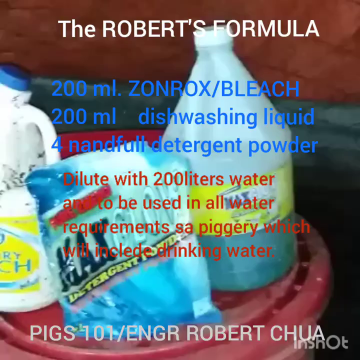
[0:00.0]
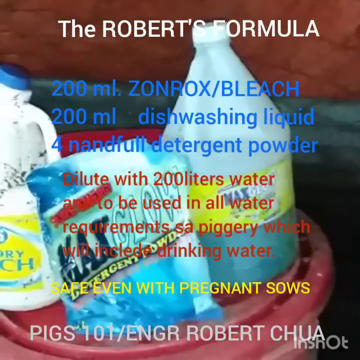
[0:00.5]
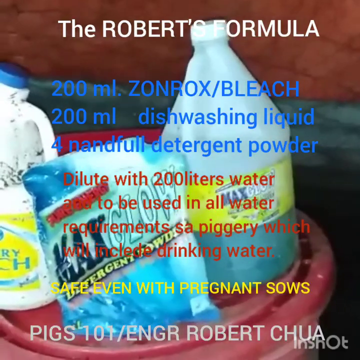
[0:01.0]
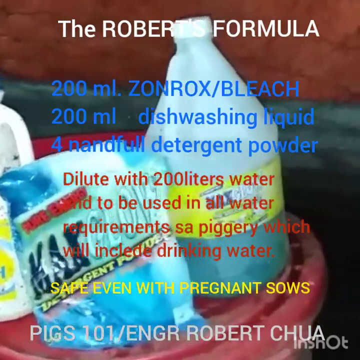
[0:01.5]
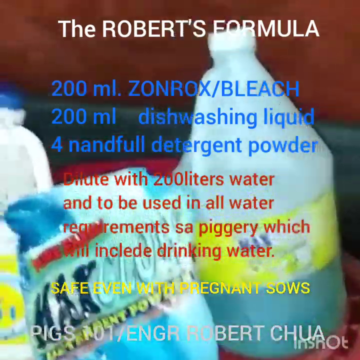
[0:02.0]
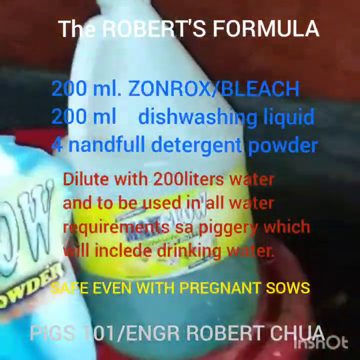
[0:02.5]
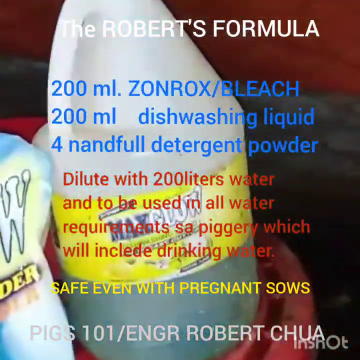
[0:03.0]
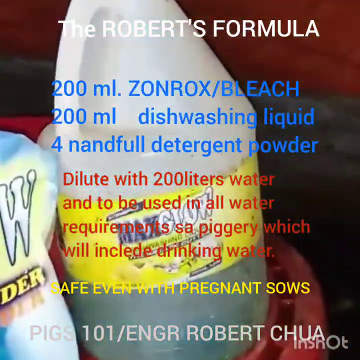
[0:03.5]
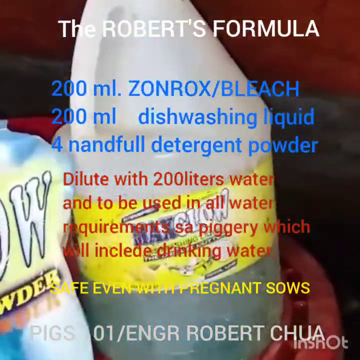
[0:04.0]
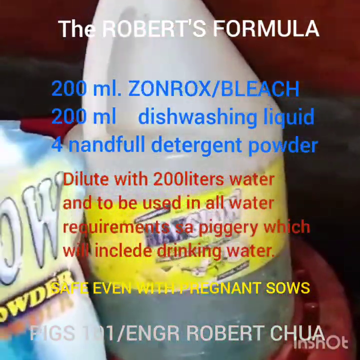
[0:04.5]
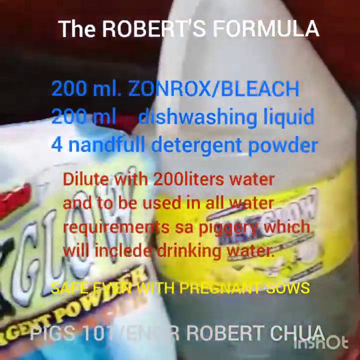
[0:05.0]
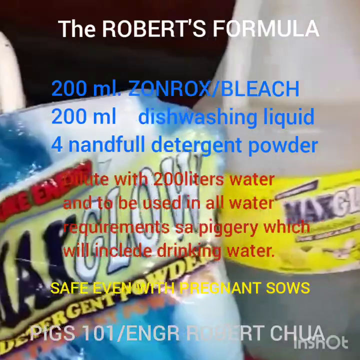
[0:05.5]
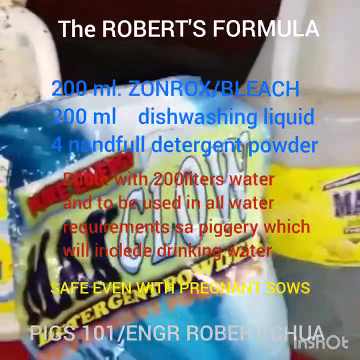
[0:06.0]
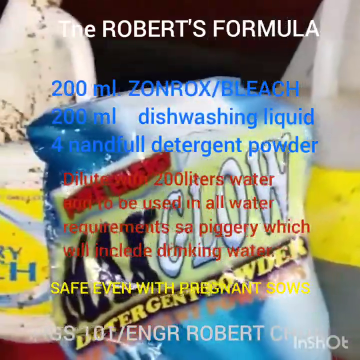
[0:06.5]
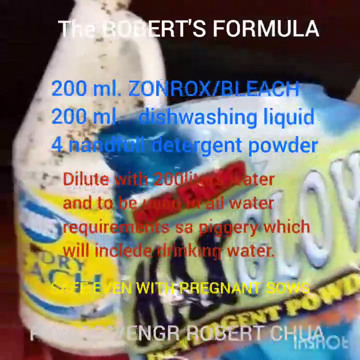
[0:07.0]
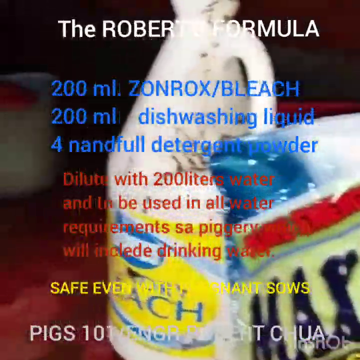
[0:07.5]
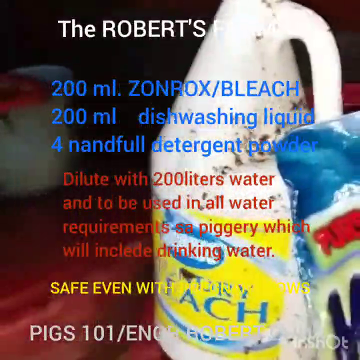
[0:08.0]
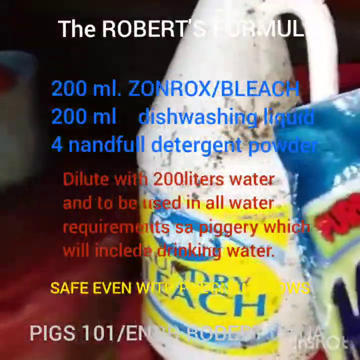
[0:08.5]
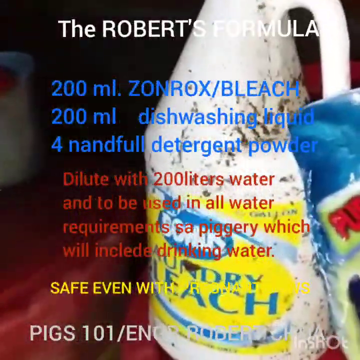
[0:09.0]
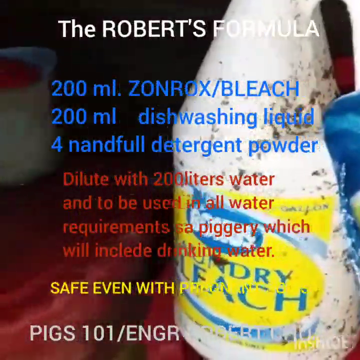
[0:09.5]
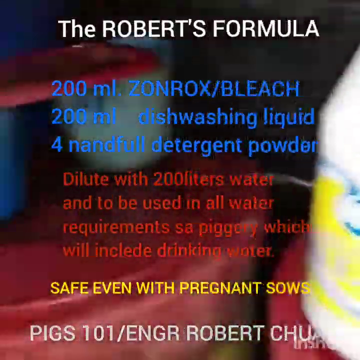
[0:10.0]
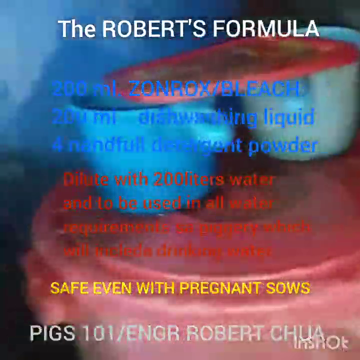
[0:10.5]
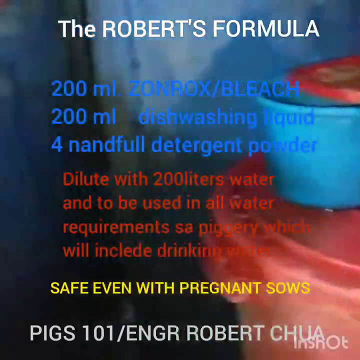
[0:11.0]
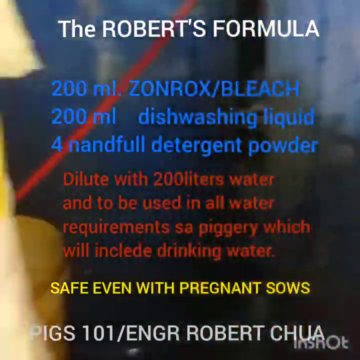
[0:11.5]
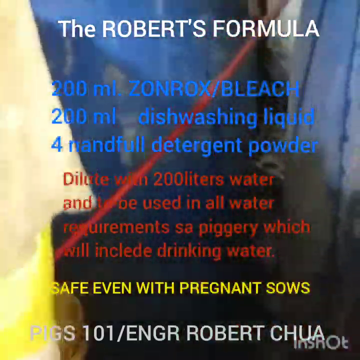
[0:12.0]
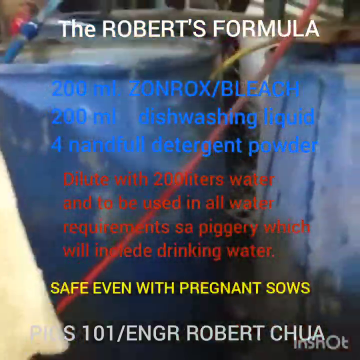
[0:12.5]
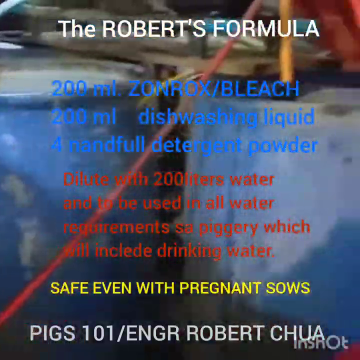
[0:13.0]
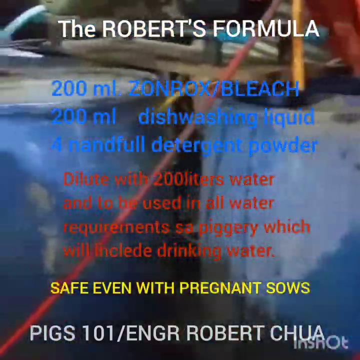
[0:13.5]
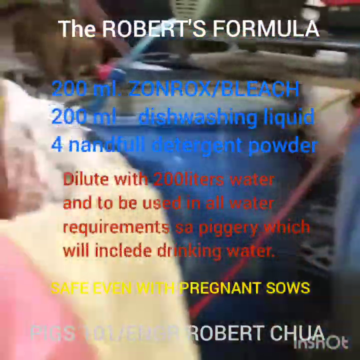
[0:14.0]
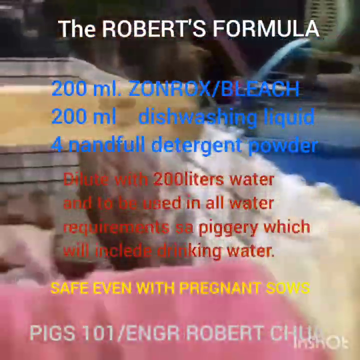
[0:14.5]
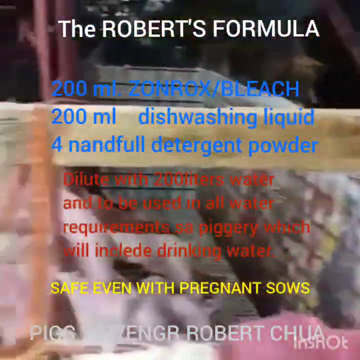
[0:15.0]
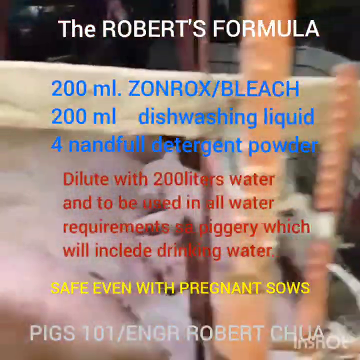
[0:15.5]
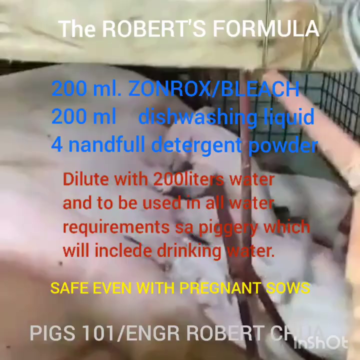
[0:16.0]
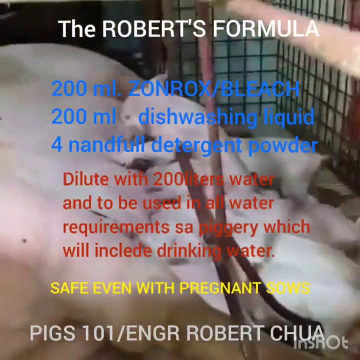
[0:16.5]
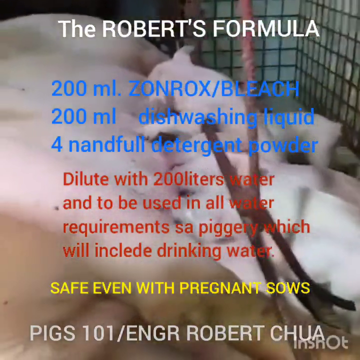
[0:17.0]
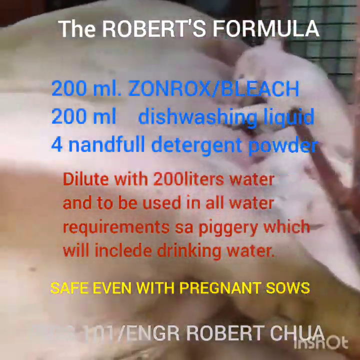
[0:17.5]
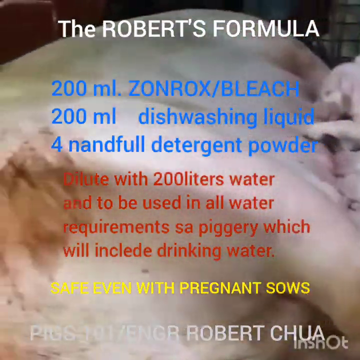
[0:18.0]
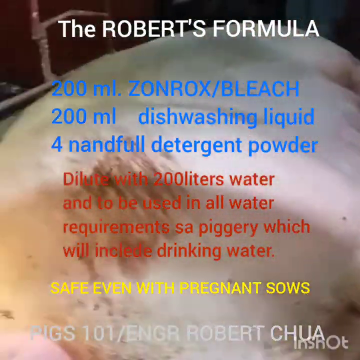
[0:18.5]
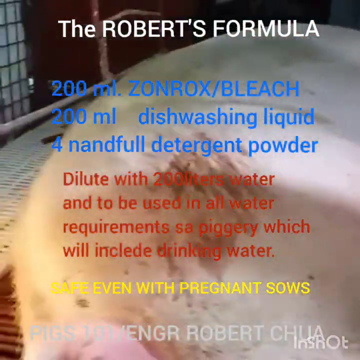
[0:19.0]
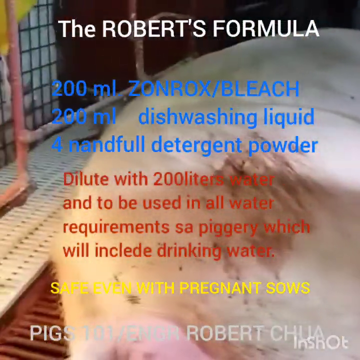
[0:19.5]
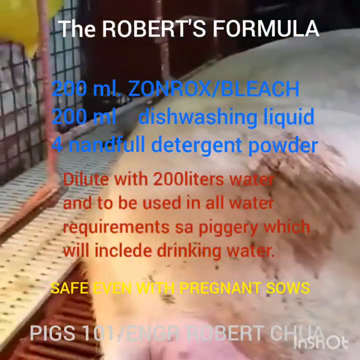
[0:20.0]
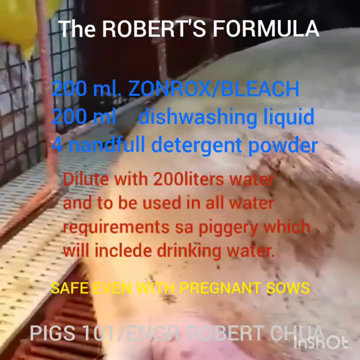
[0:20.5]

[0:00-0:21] What looks like some kind of cleaning formula is shown. At the top, text reads "the Roberts formula," followed by "200 milliliters each of Zonrix/bleach and dishwashing liquid" and "four handfuls of detergent powder." Below, in red, the text says "dilute with 200 liters water and to be used in all water requirements," "which will include drinking water." In yellow, it says "safe even with pregnant sows," and under that, in white, text reads "pigs 101" and "ENGR Robert Chua." The formula stays posted the entire time while, in the background, the camera kind of spans over the different ingredients used to make it. A mother pig with some babies is also visible in the background.